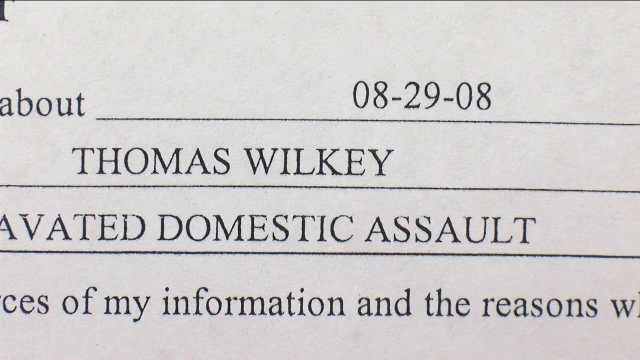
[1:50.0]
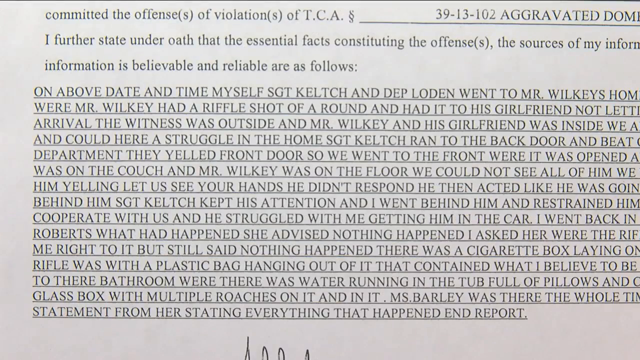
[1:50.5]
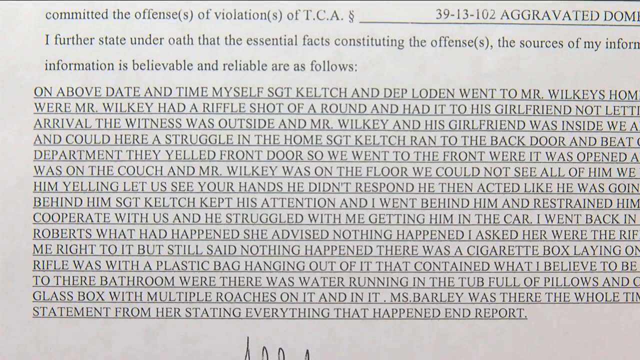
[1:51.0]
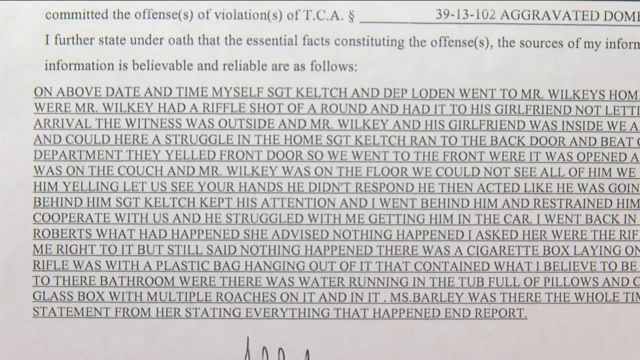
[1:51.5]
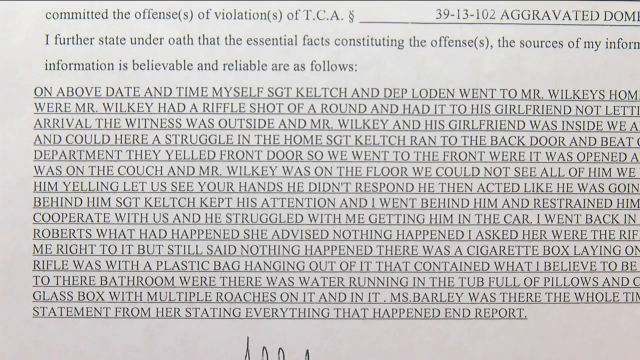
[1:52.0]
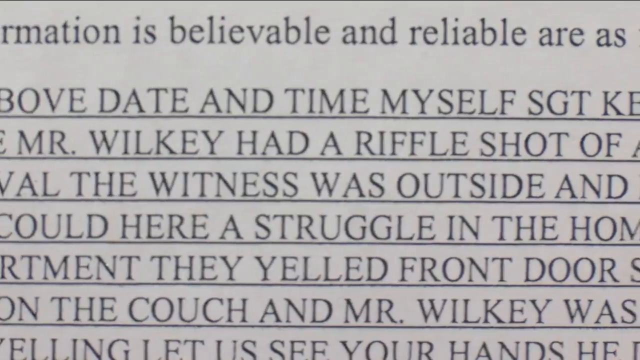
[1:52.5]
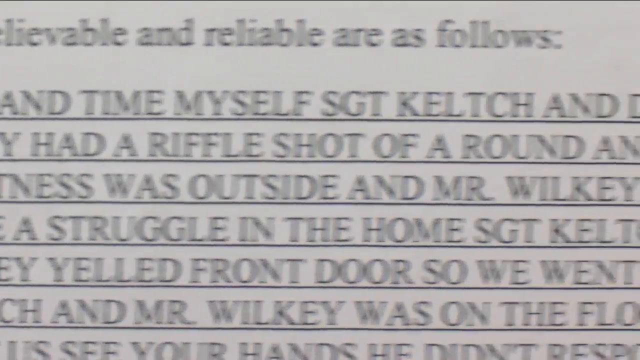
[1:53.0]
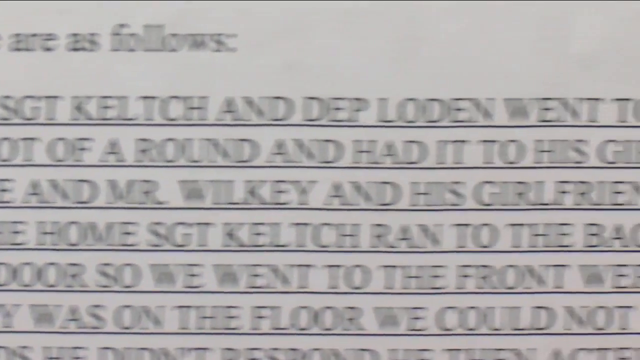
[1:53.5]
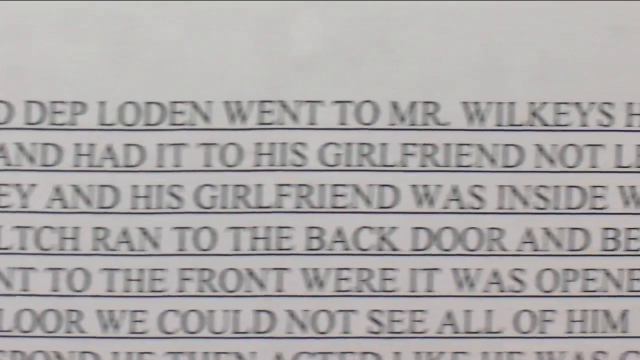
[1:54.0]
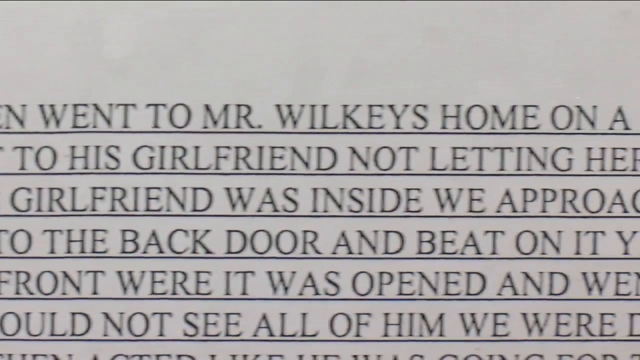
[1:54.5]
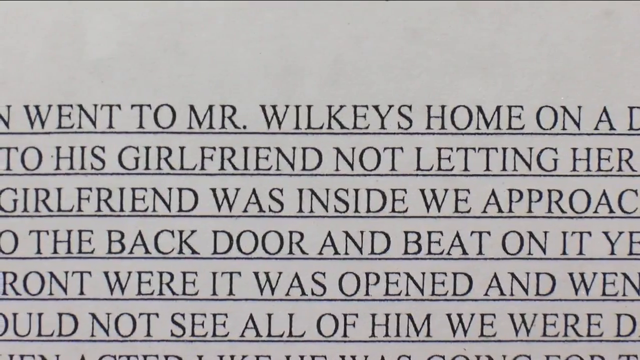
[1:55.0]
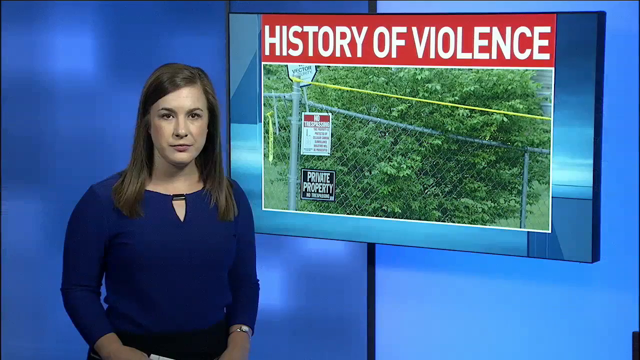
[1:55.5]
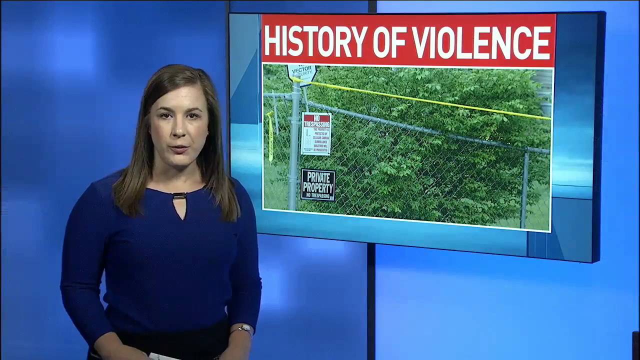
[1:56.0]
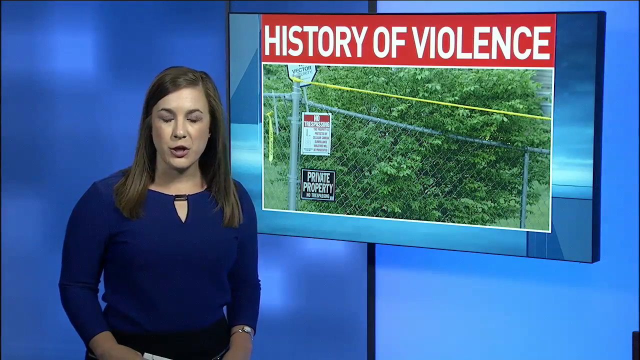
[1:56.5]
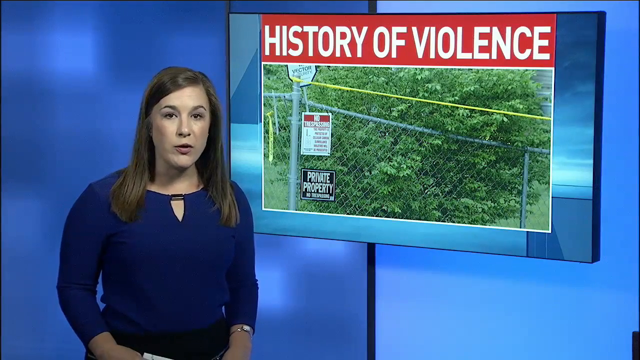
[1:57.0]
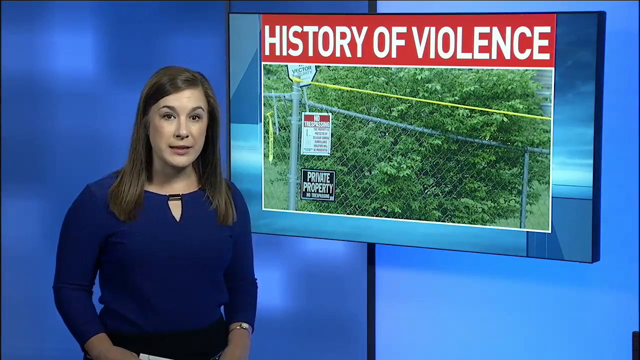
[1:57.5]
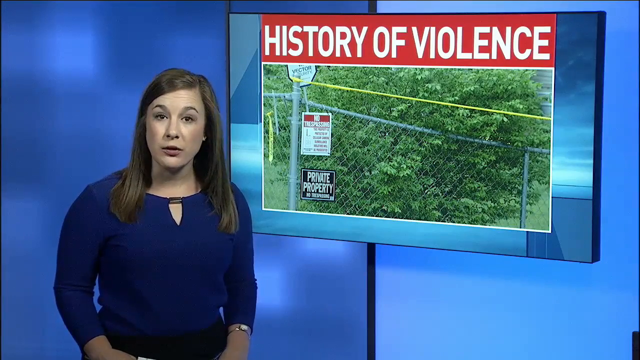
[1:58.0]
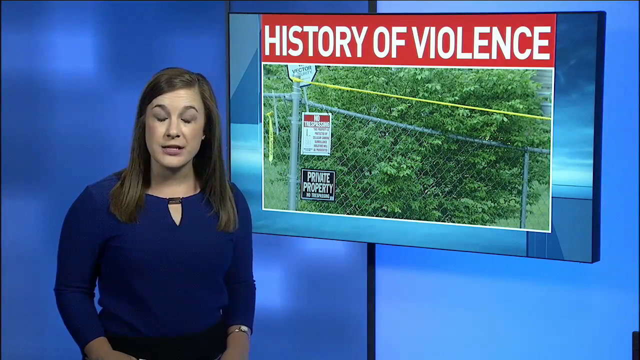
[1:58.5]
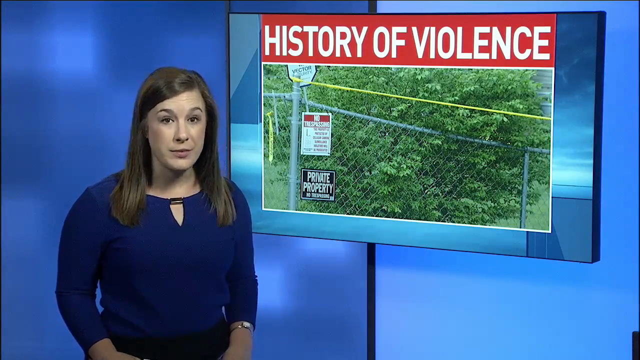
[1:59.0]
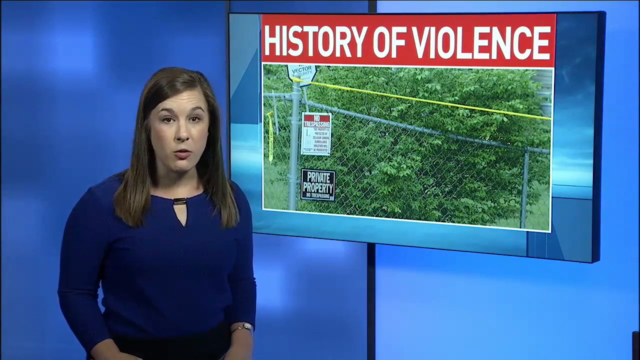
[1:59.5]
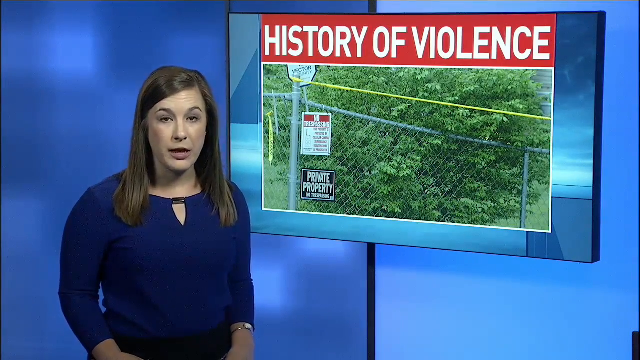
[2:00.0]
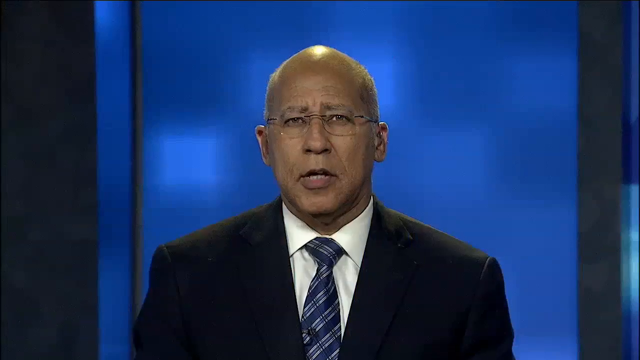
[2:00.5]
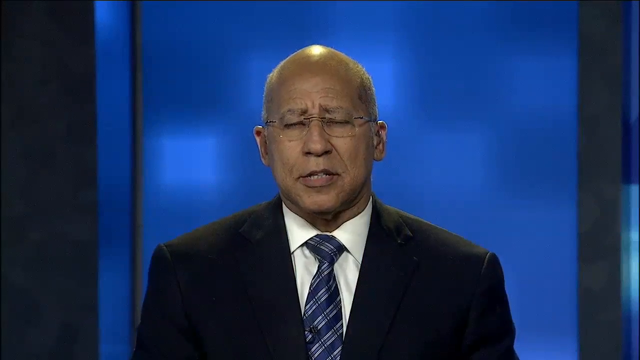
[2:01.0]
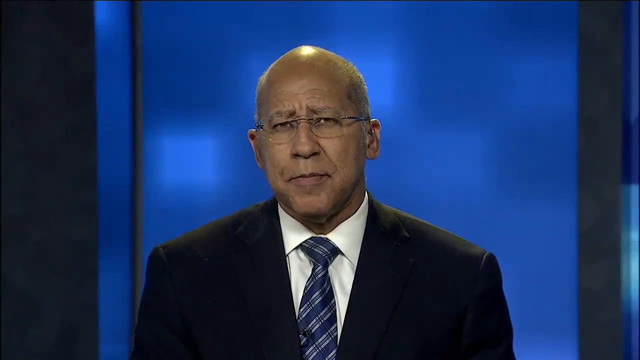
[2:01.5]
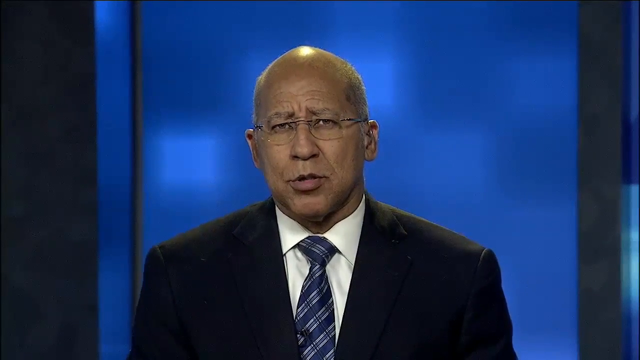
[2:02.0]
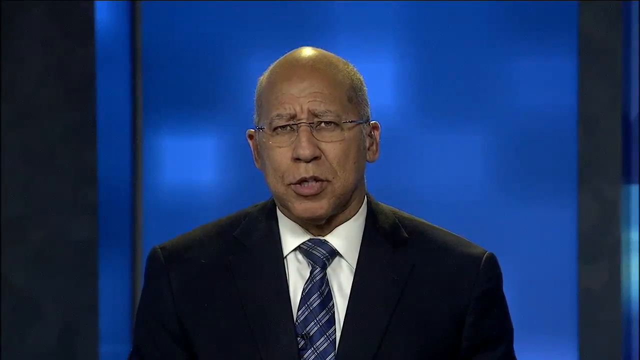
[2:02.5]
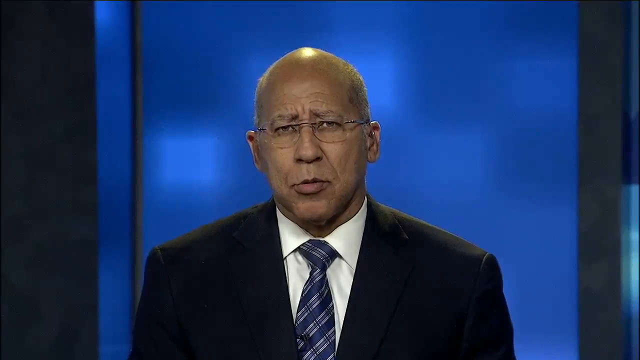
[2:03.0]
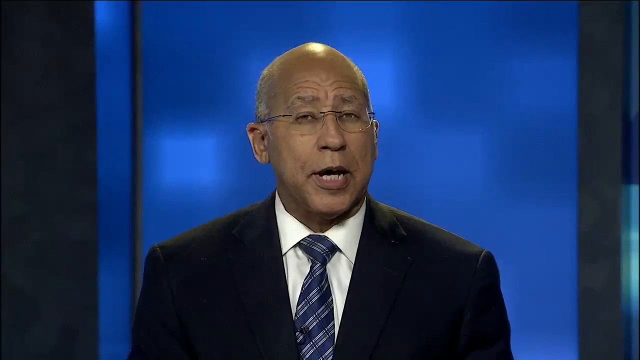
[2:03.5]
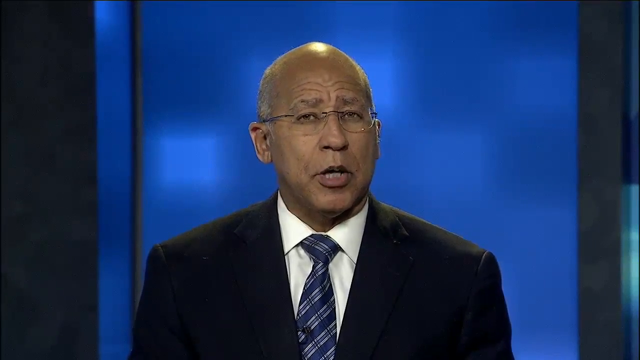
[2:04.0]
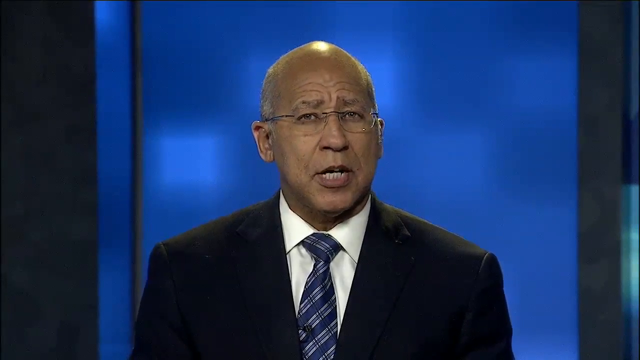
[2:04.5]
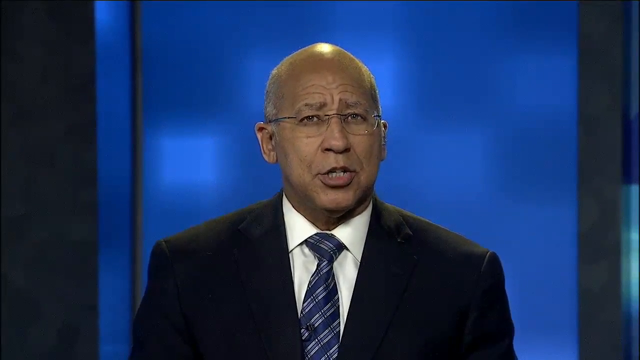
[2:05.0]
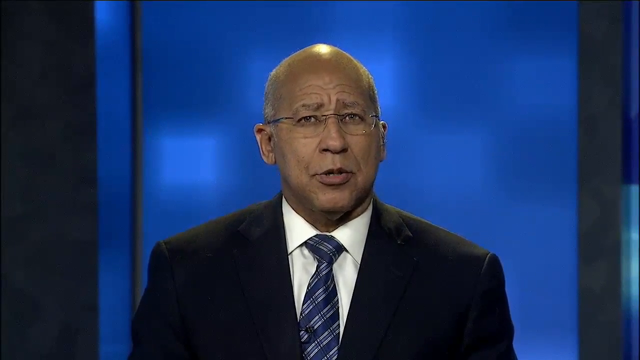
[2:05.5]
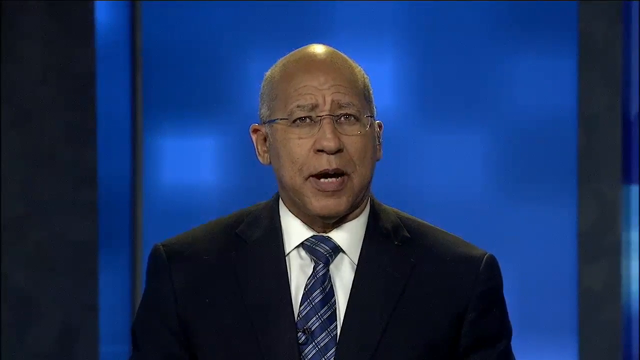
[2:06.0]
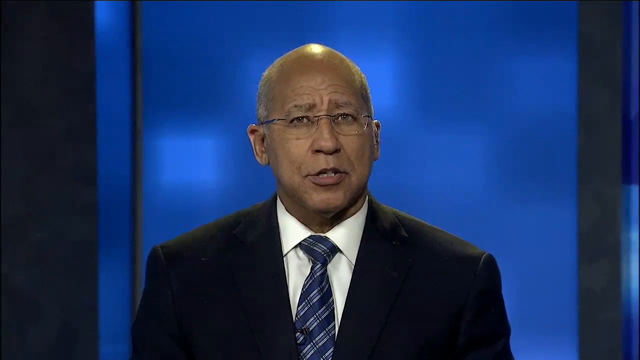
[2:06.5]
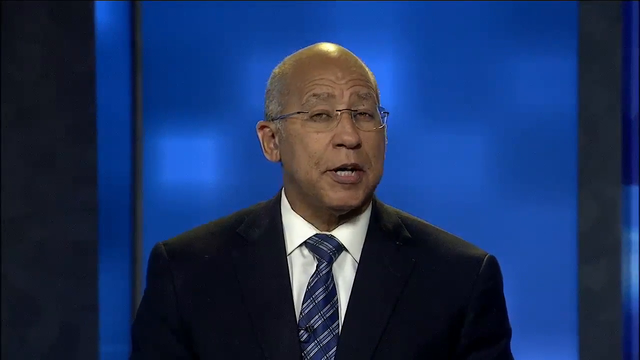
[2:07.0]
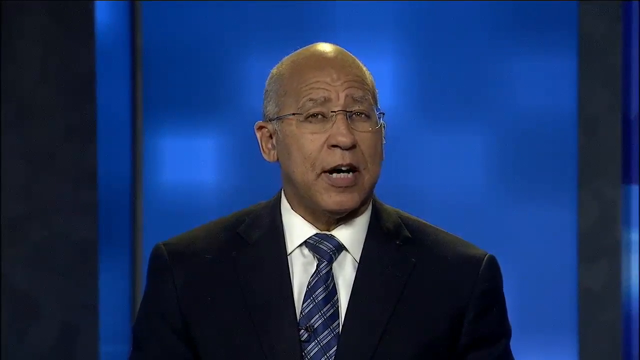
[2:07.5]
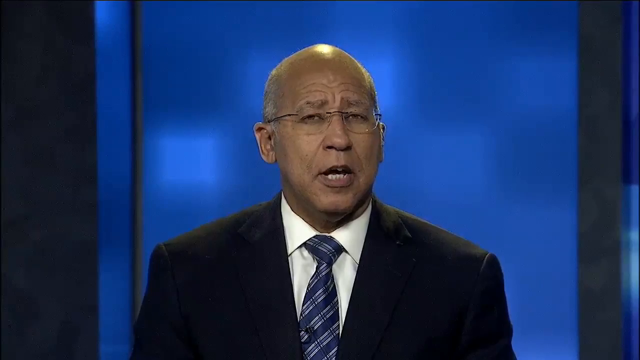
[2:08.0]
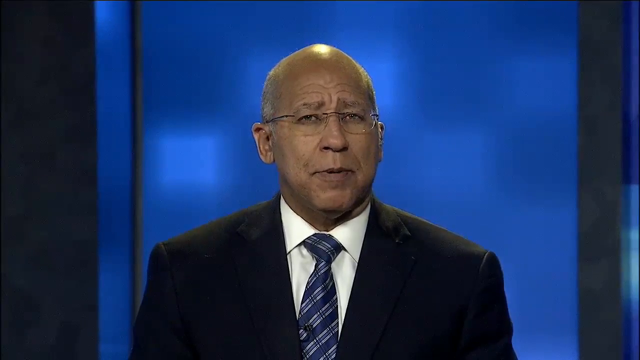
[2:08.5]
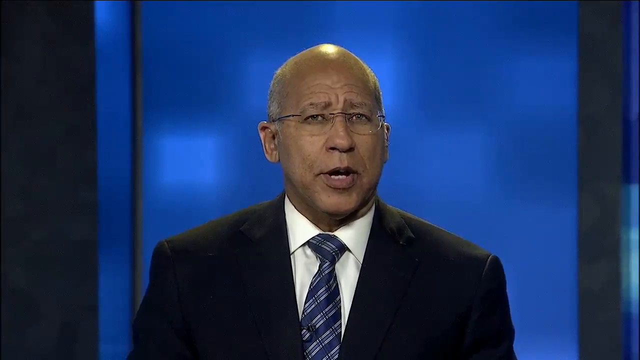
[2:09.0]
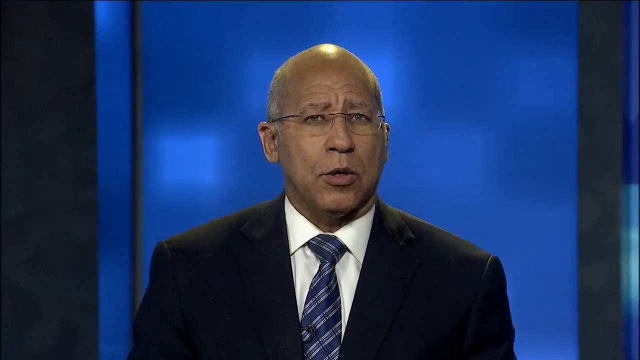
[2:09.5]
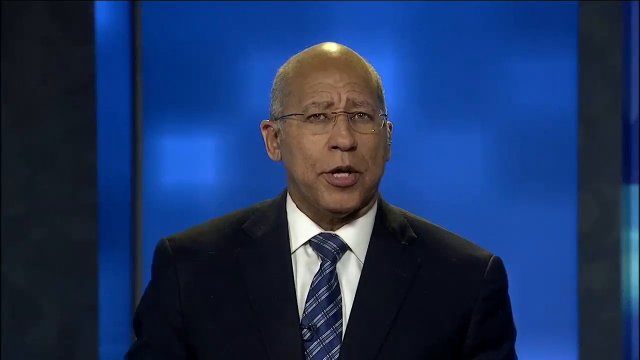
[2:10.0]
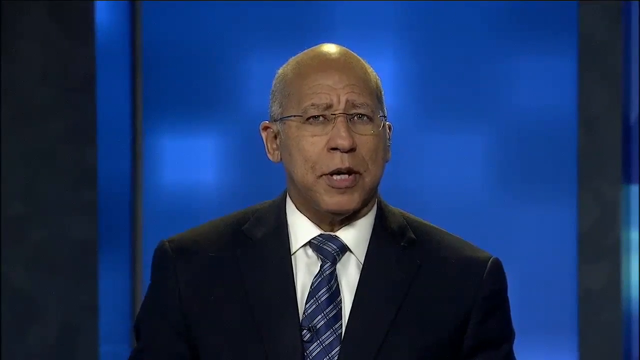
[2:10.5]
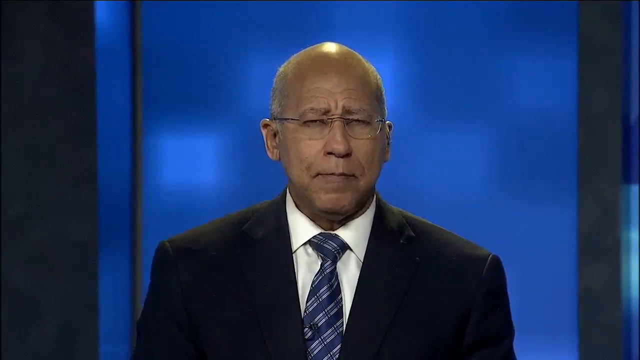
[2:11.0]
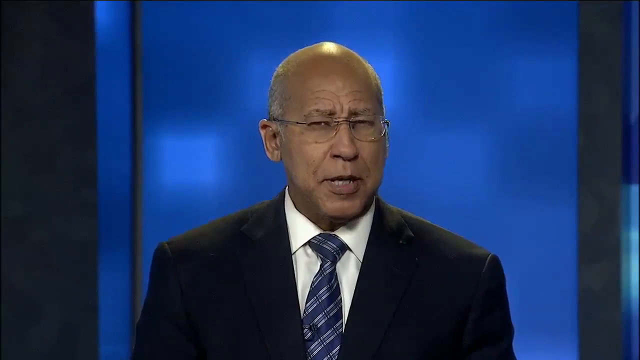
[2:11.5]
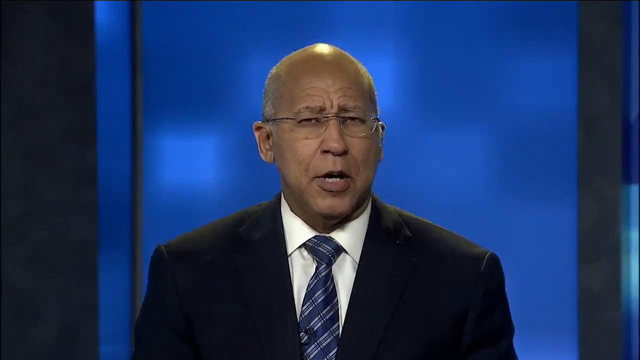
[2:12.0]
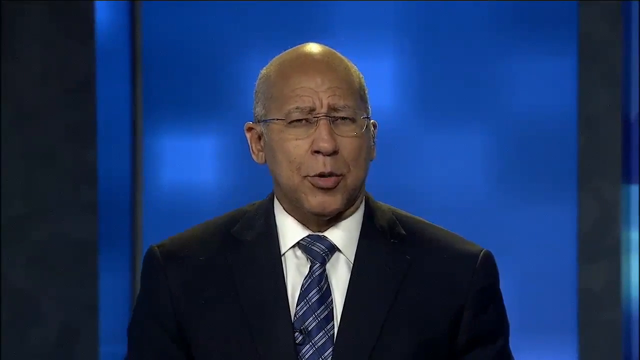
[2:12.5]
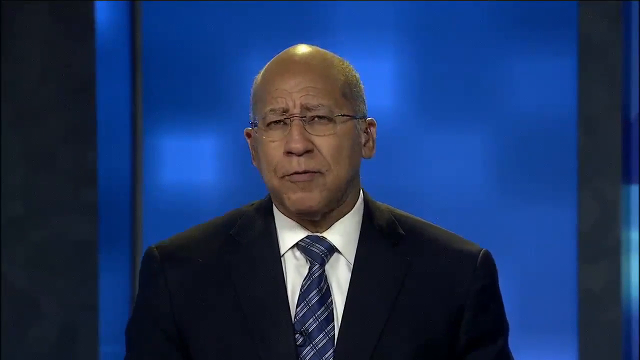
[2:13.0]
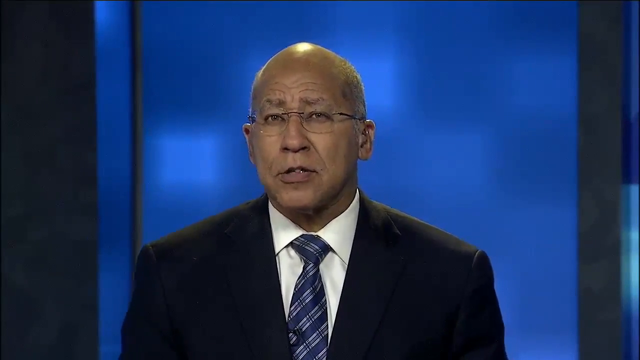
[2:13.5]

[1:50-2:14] The same document is zoomed in, then zooms out, zooms in again and pans to the right. The video returns to the news studio, where the younger woman with long brown hair and a blue top is in front of the image that says "history of violence" on a very red background. Below it are some trees, some police tape and a fence that says "private property". She talks with some emotion, nodding her head and raising her eyebrows. The video then switches to the bald male presenter, who frowns while he talks. He wears glasses with very small lenses, raises his eyebrows as he talks and makes big mouth movements, continuing to talk with a very serious expression, his frown marks visible as he lifts his eyebrows.